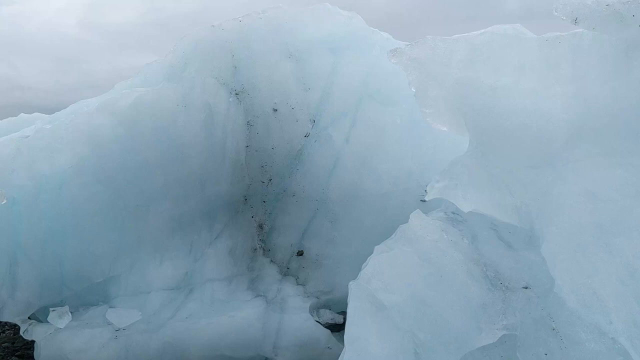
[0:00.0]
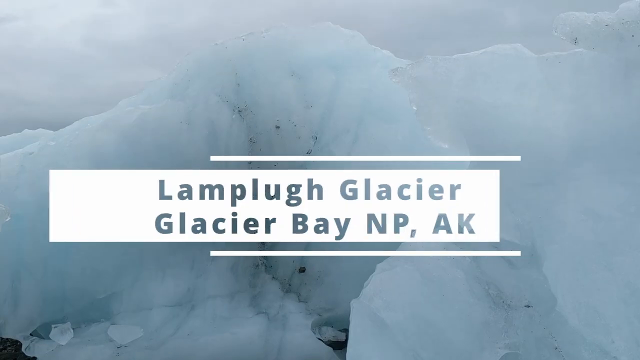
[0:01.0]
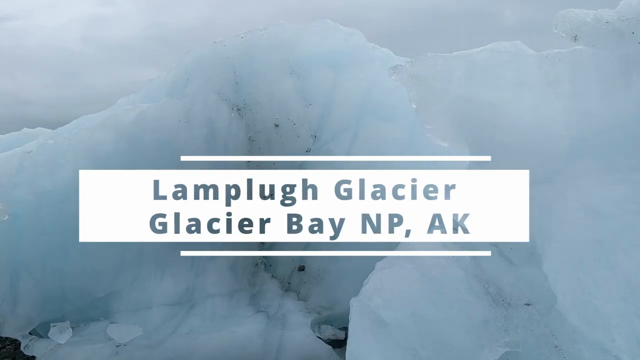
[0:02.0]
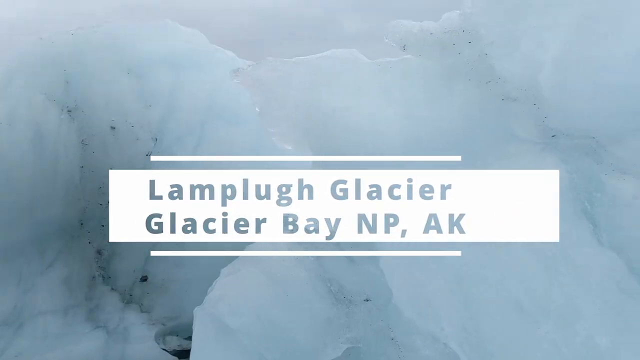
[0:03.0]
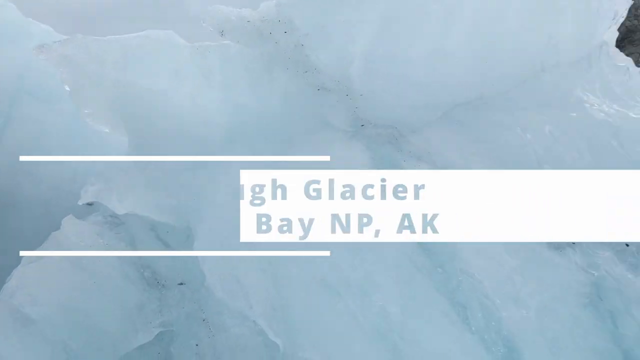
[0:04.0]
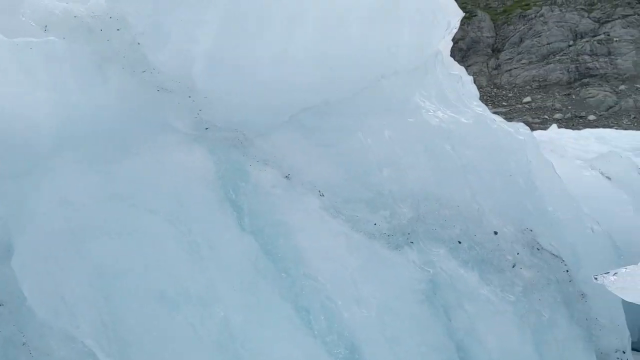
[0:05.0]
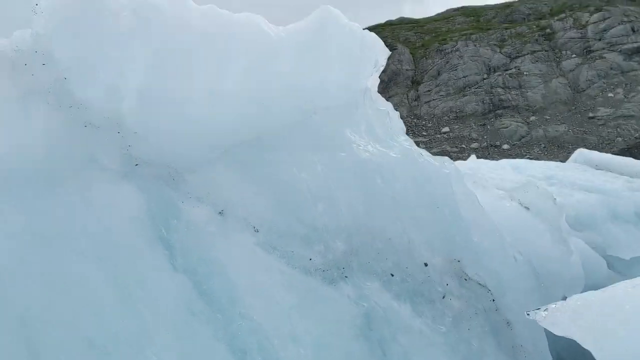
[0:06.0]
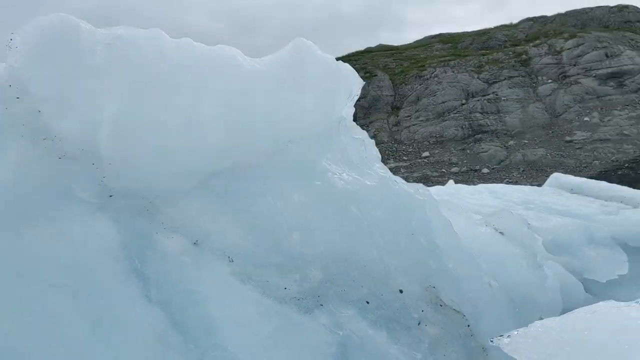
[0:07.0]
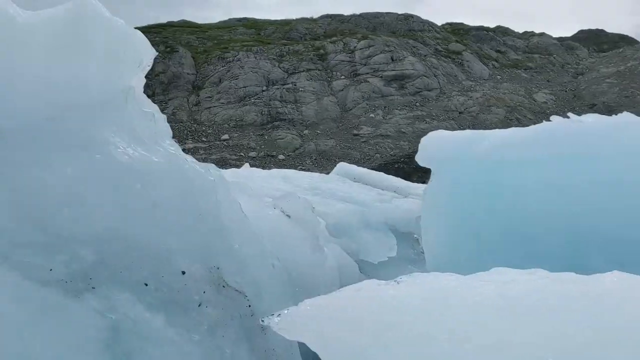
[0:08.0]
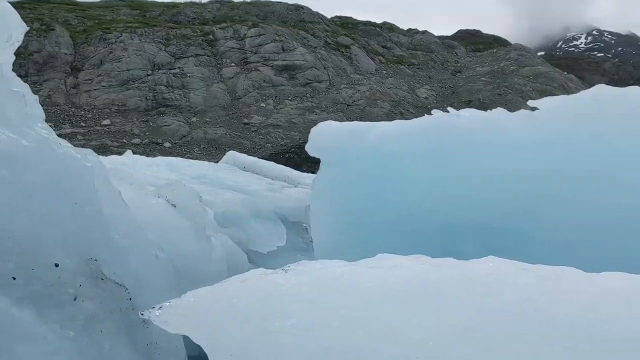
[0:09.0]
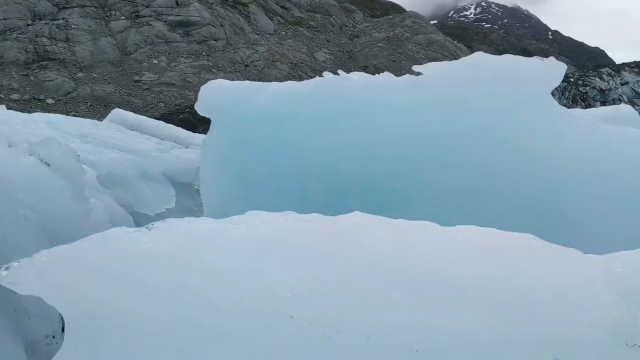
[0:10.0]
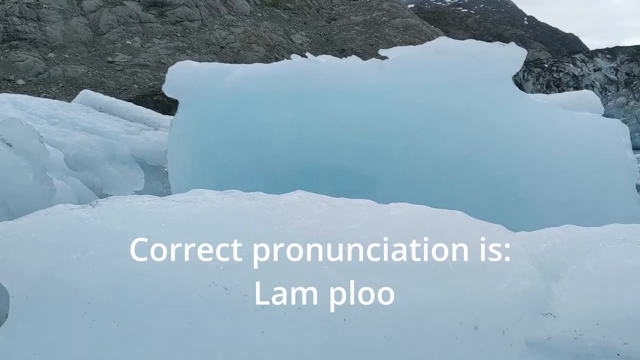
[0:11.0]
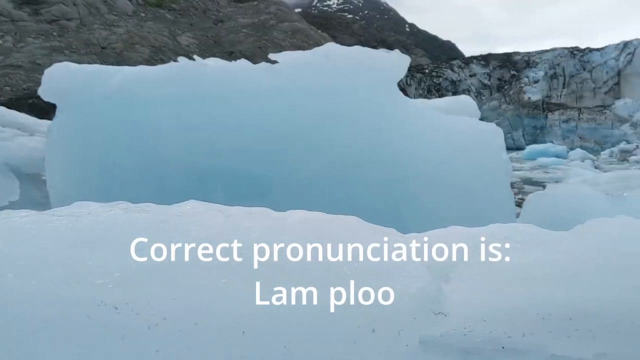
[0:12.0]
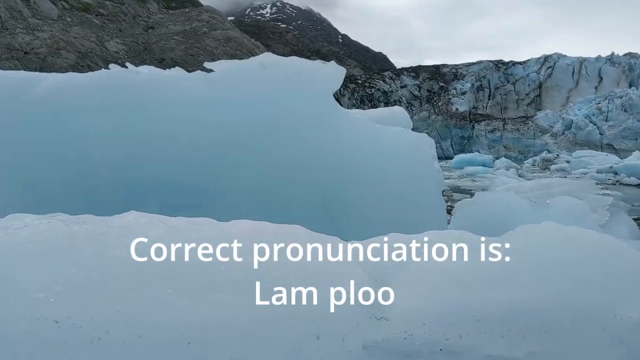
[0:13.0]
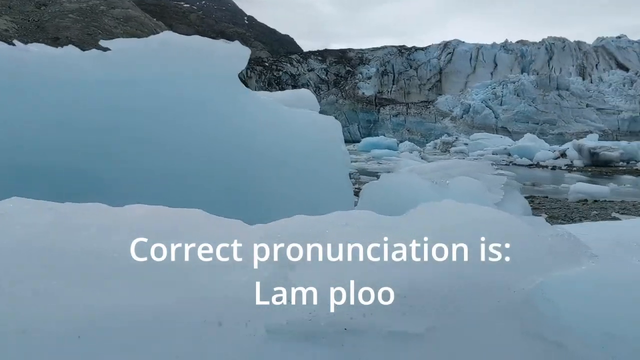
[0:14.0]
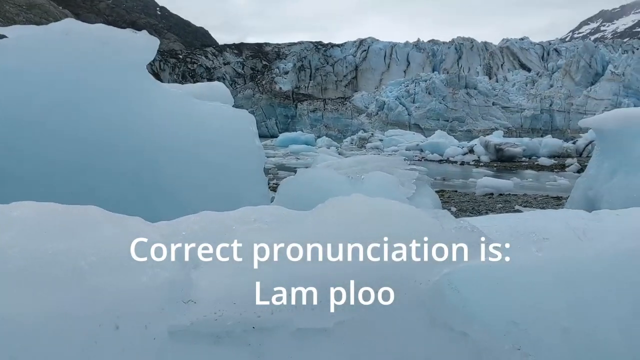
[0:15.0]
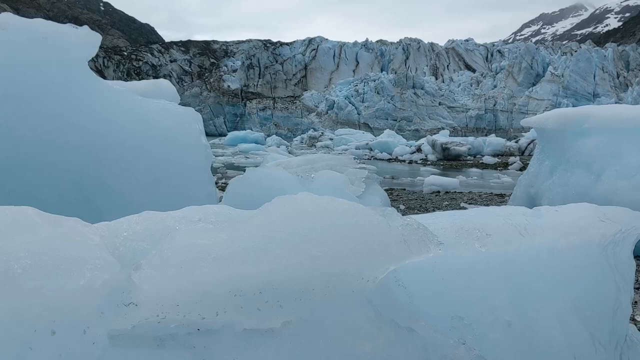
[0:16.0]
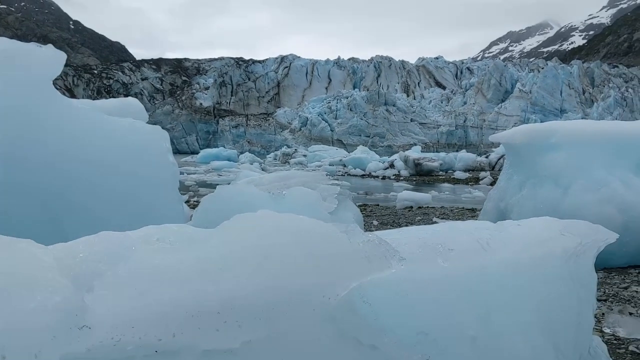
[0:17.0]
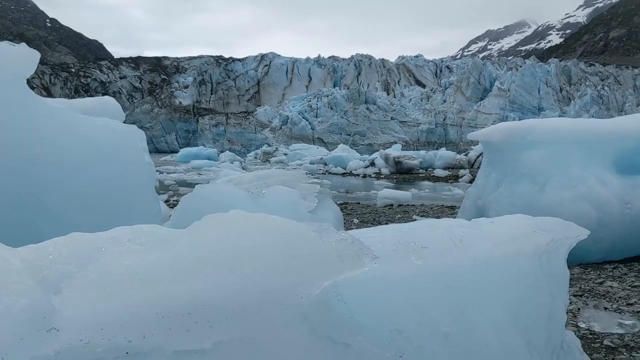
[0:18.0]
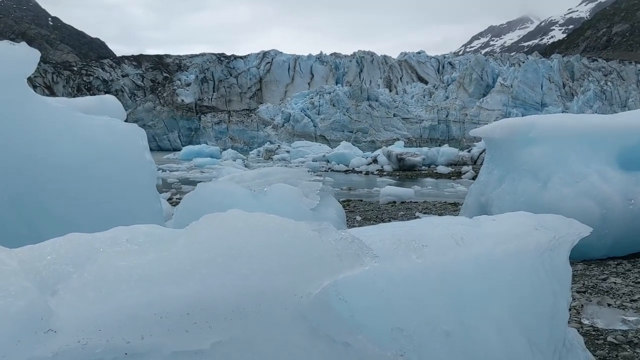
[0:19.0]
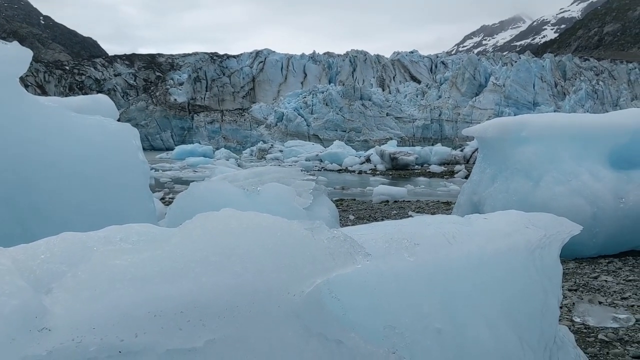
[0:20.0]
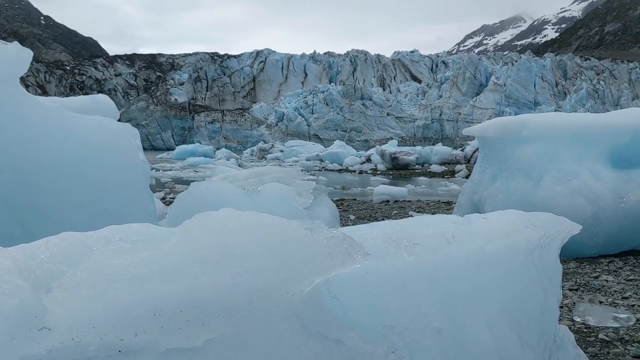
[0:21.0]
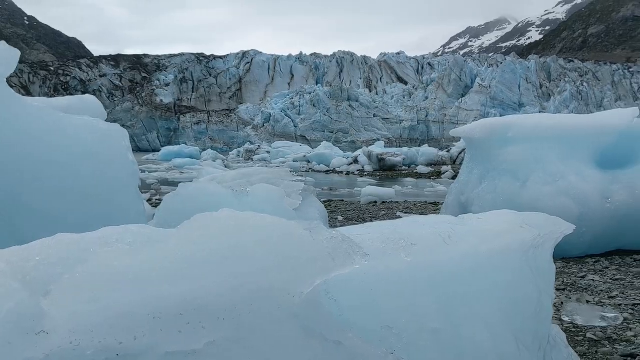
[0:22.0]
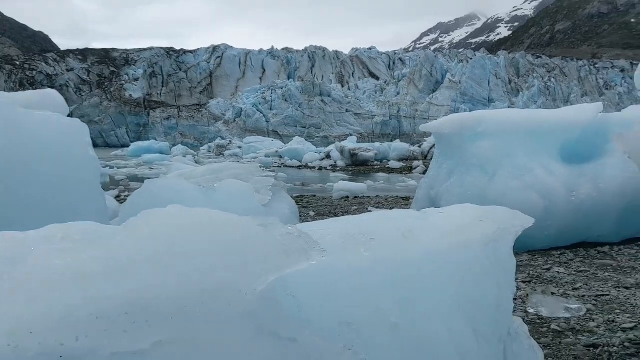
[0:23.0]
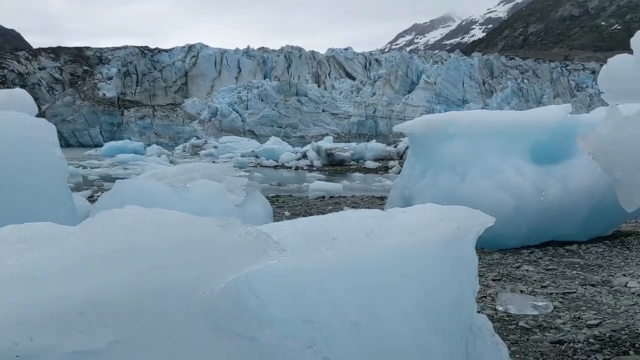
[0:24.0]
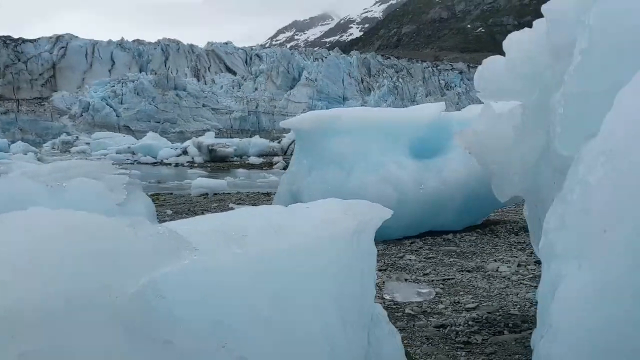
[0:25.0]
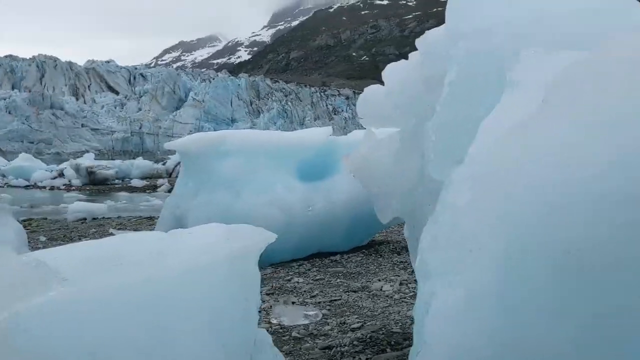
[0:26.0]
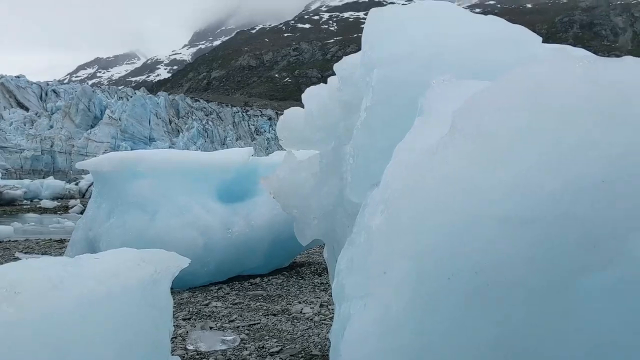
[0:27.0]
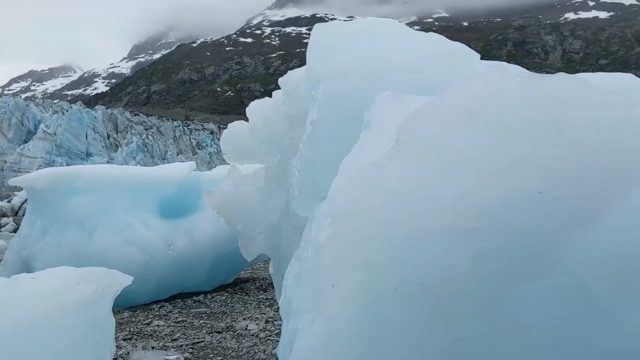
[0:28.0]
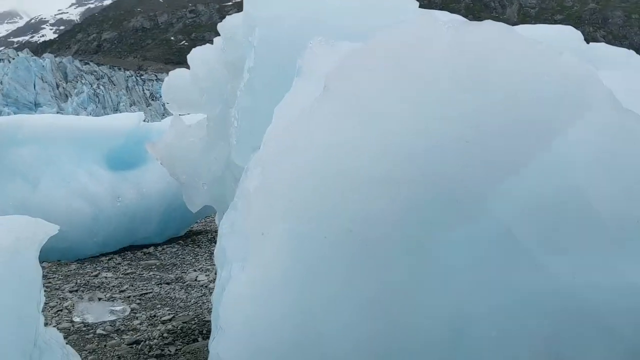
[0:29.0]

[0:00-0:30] A big translucent bluish-white block of ice is on screen, and a caption appears in the centre of the screen in a white rectangular box reading "Lamplugh Glacier, Glacier Bay, NP, .AK". The caption vanishes, revealing big blocks of ice in the foreground, presumably the glacier, and bleak light grey cliffs with a very thin smattering of green vegetation in the background. In the far distance is a tall mountain with some snow on it, its top shrouded in grey cloud. The camera pans to the right as another caption appears reading "Correct pronunciation is Lam ploo", moving past big blue-white translucent blocks of ice. A pool of melted ice with what look like little icebergs in it comes into view, and behind it are more jagged ice boulders and a cliff covered in ice, presumably a wall of the glacier.